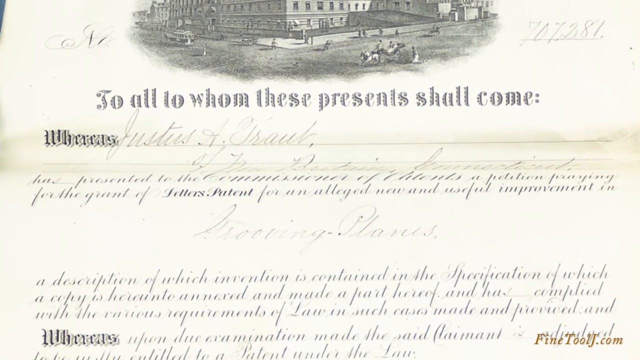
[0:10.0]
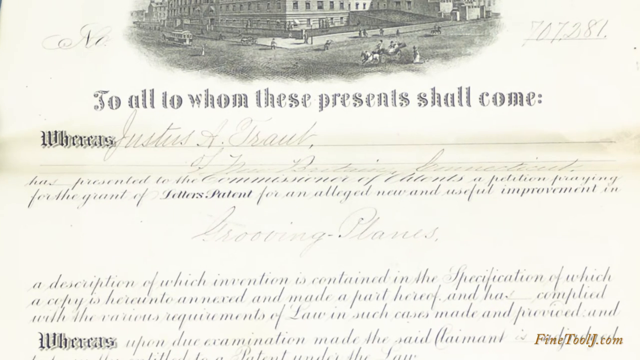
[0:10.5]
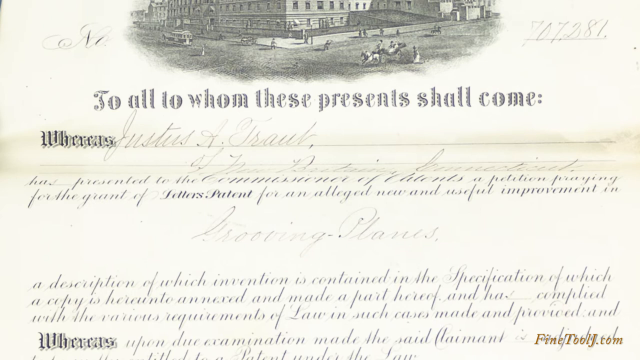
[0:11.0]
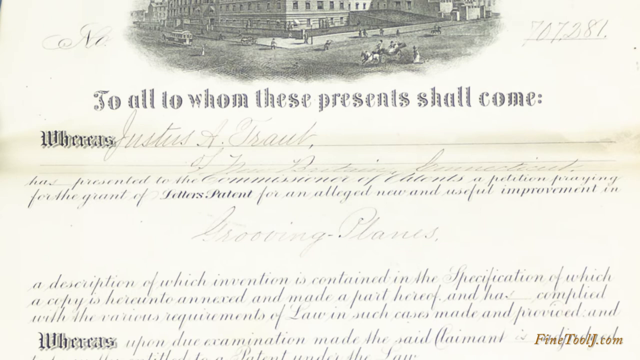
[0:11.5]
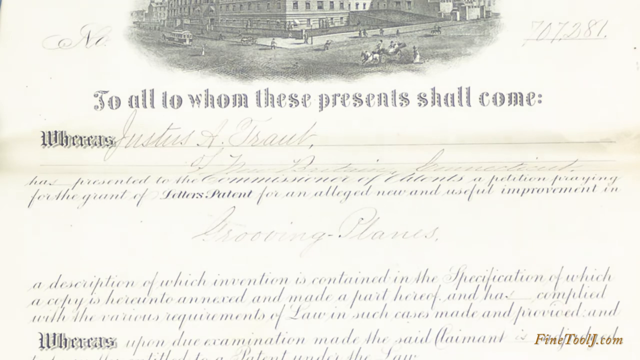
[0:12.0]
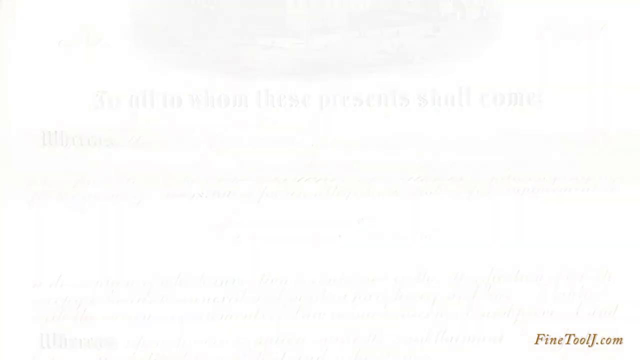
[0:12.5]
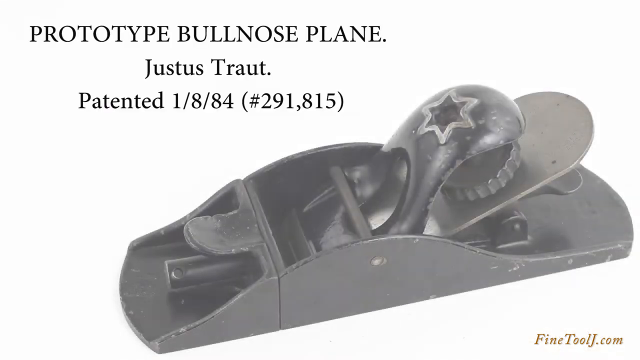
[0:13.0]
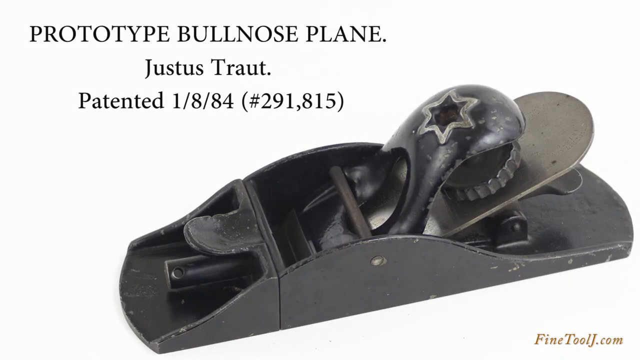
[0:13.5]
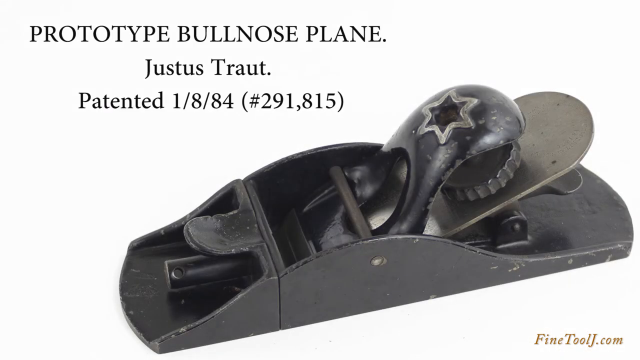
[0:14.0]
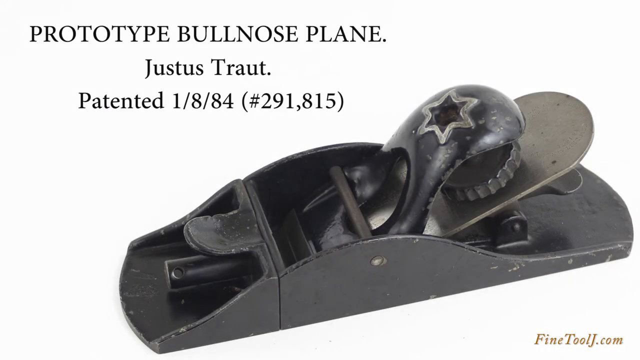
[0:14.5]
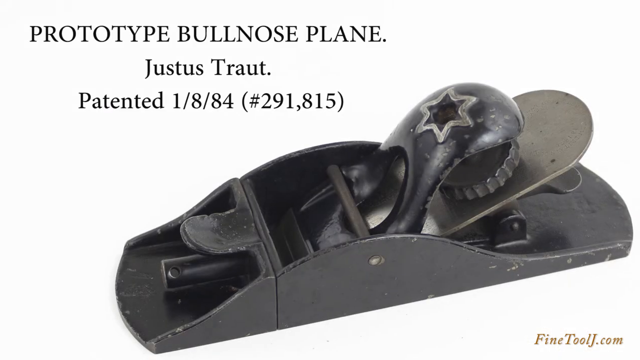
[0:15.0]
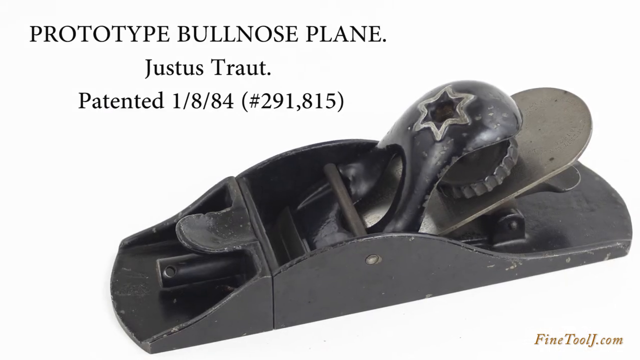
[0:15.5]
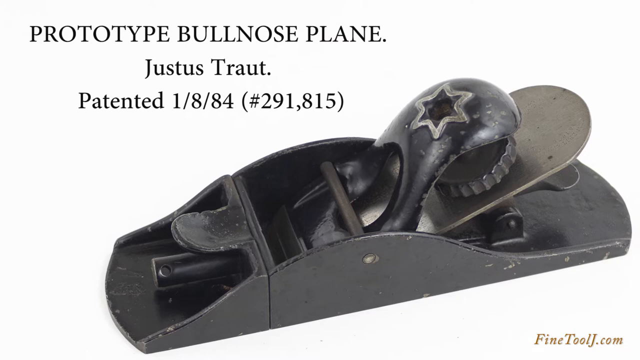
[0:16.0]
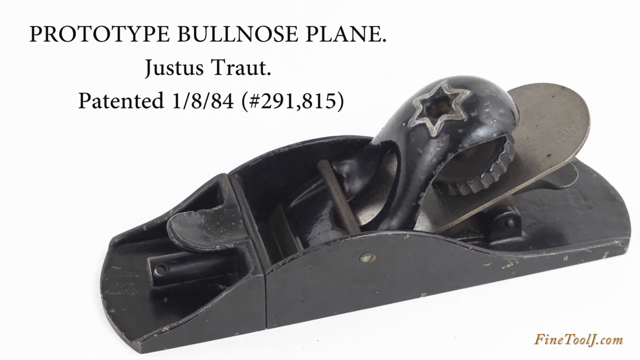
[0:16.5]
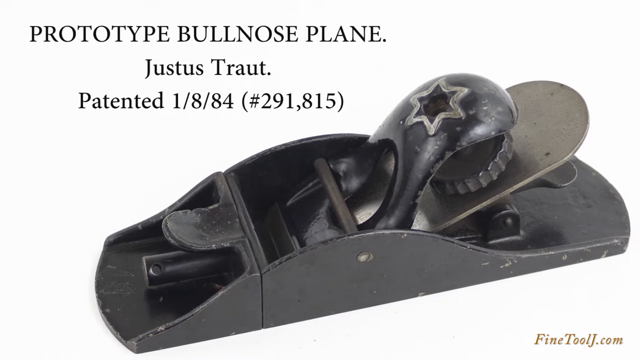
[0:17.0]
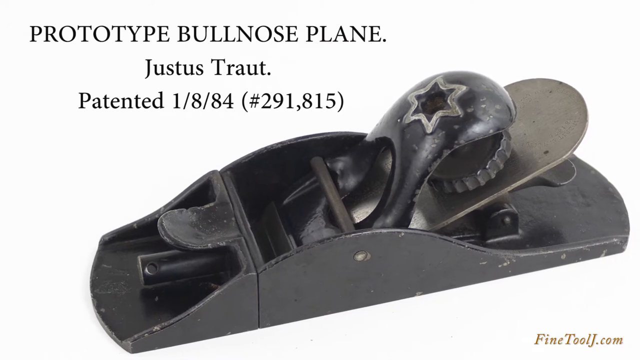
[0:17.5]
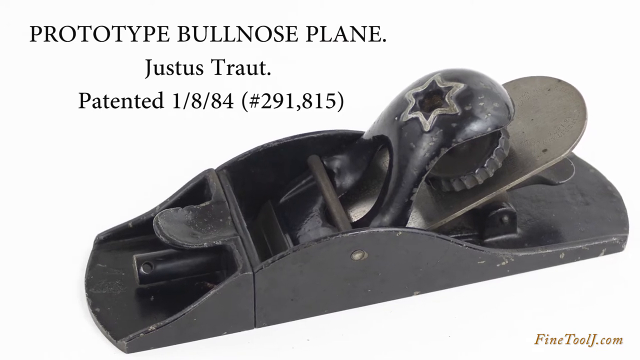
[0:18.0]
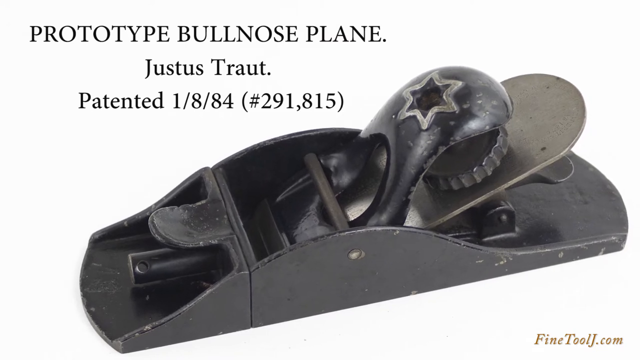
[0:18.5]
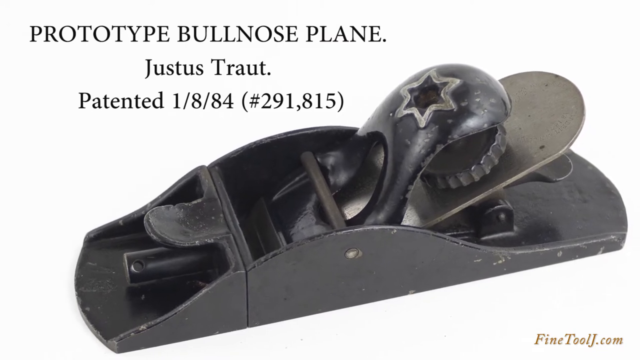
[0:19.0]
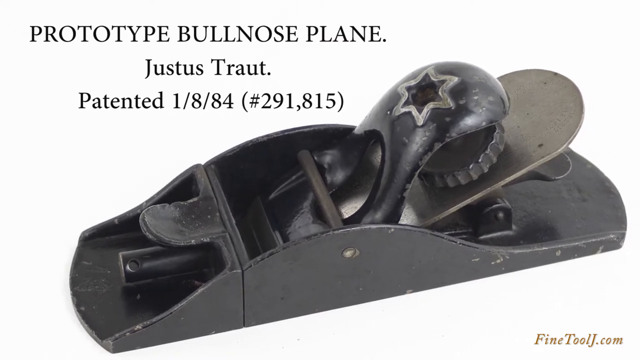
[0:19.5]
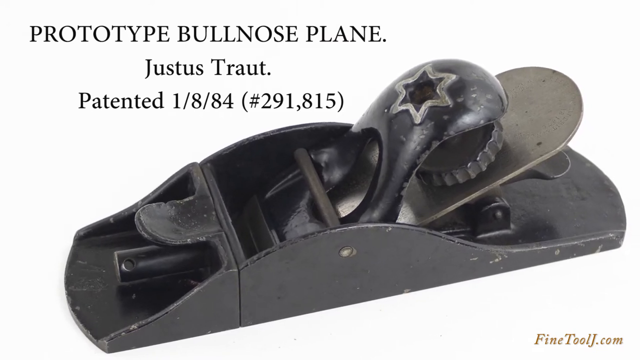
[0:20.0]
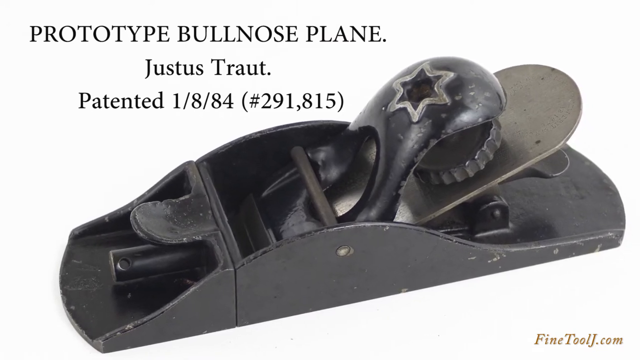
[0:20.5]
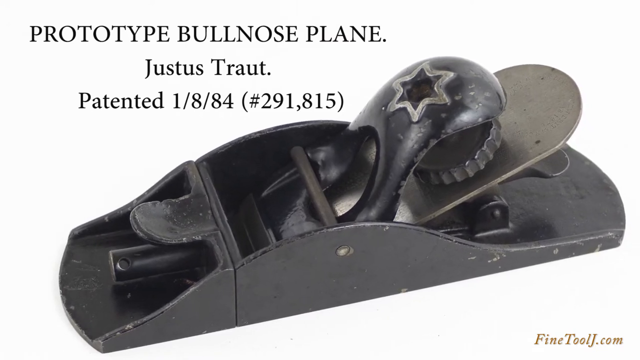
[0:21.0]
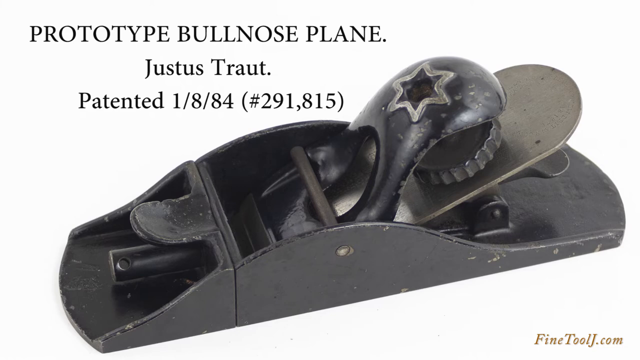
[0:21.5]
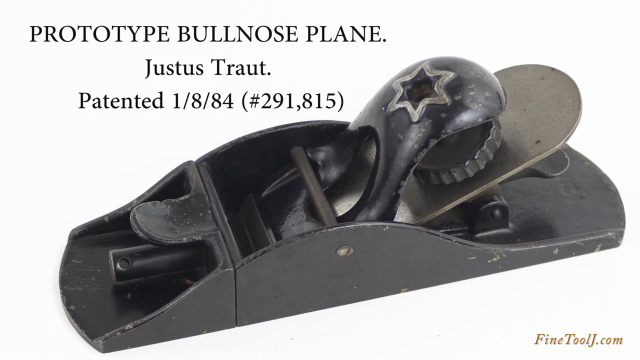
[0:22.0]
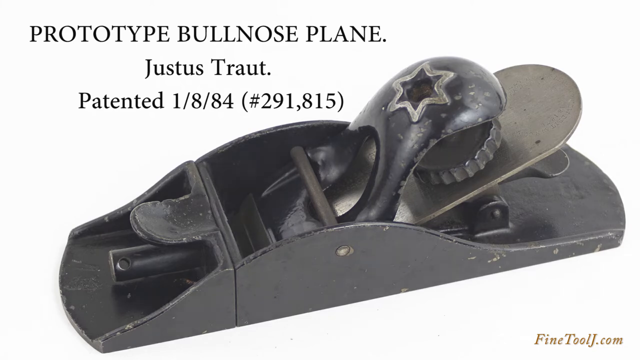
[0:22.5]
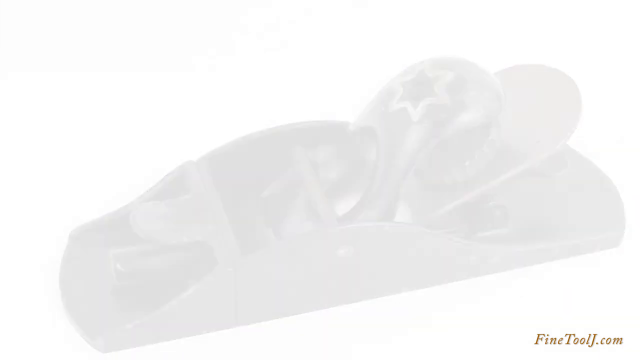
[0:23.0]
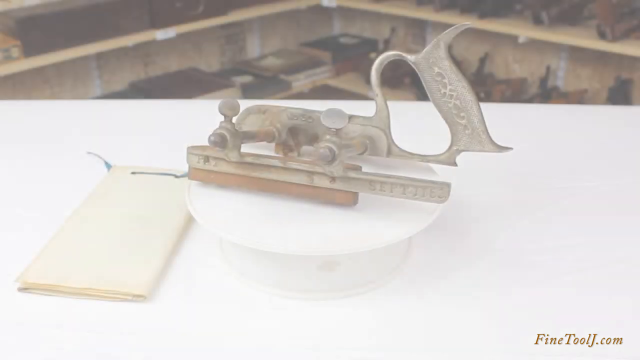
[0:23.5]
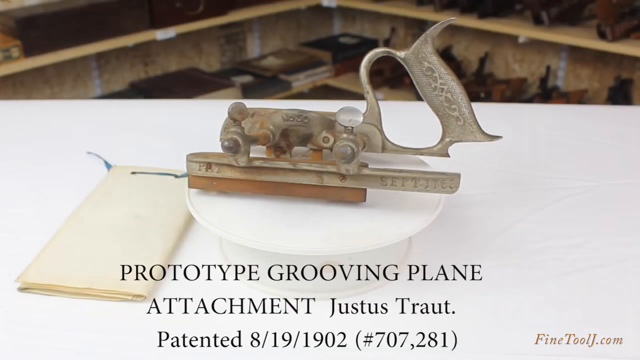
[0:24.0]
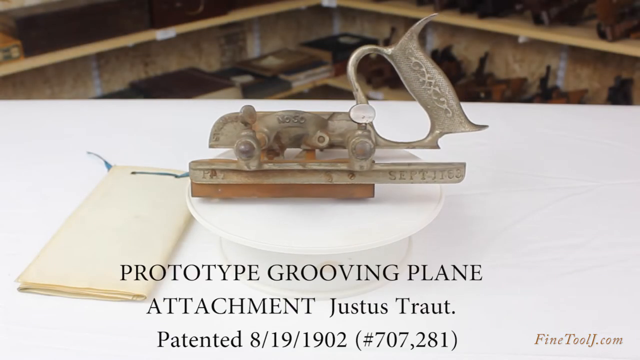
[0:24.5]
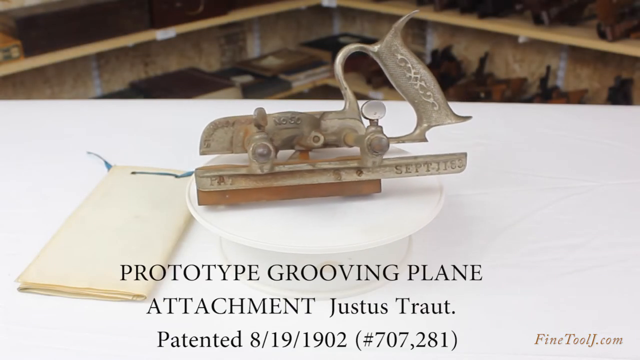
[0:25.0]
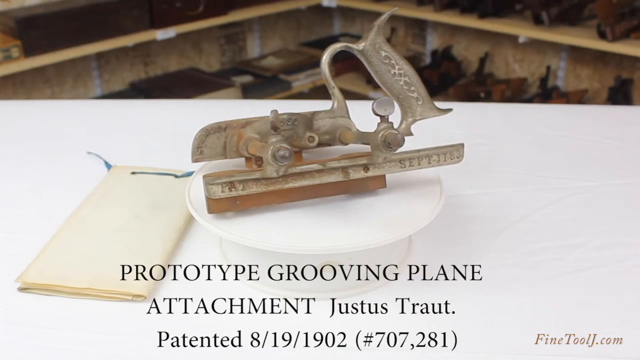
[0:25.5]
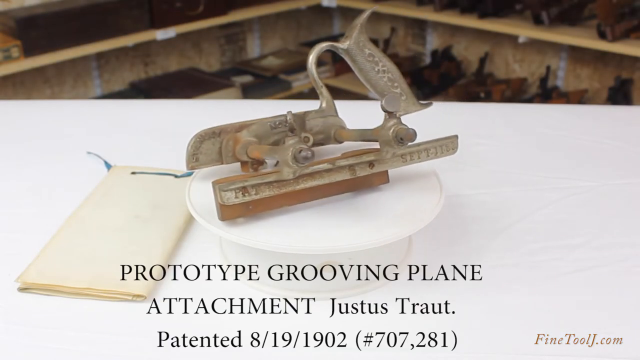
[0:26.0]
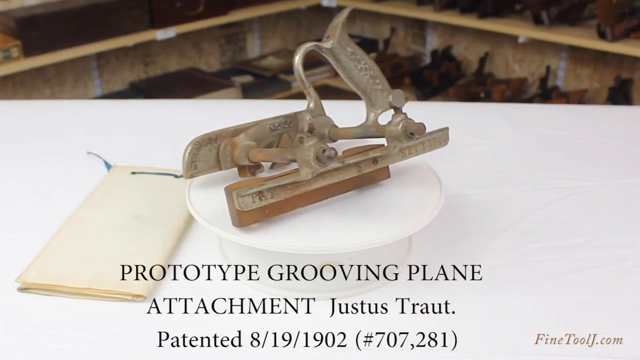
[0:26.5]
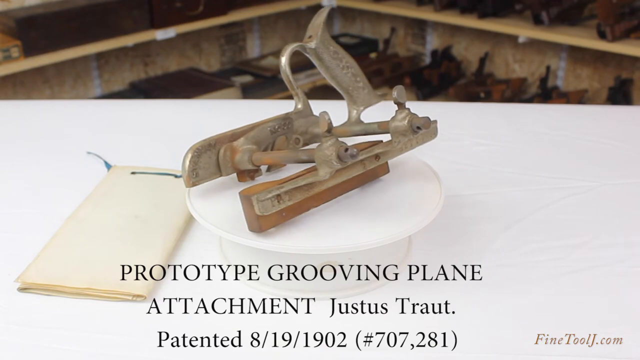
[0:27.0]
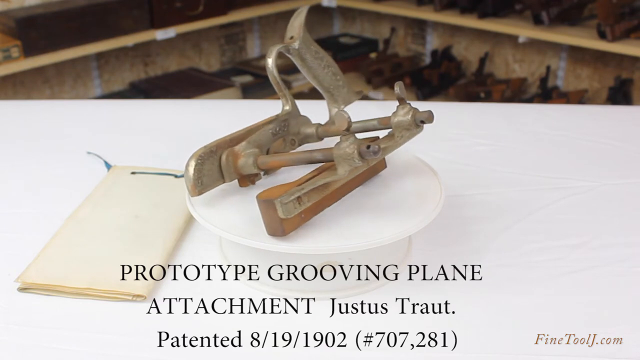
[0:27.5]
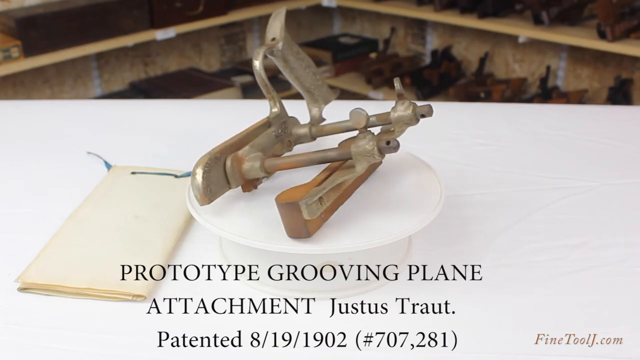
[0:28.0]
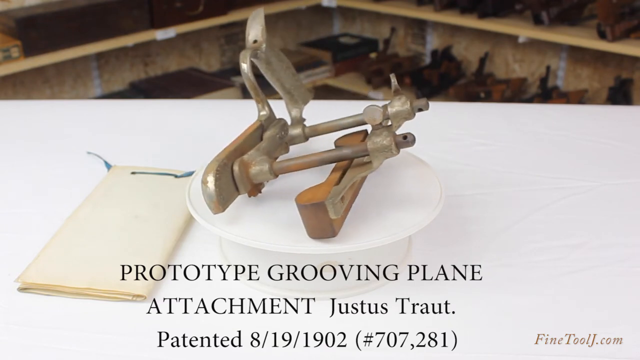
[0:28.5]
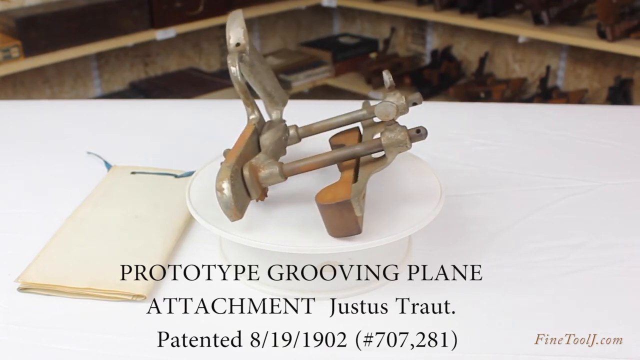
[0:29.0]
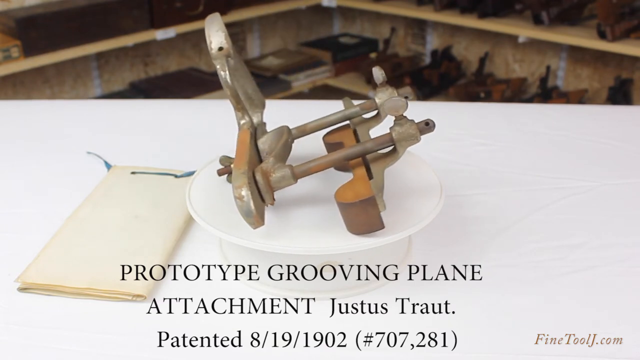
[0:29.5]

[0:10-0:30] A white document has, at its top, an illustration of an intersecting block or street. On the street are both a horse and buggy and a car or vehicle, people are walking on the sidewalk and through the street, and several buildings are illustrated in the background. Beneath the illustration, gray text says "To all to whom these presents shall come:". In the lower right corner of the video, brown text reads "FinetoolJ.com". The video zooms in on the document and fades to white. When it fades back in, the background is white, and black text in the upper left corner reads "Prototype Bullnose Plane.", with "Justus Traut." beneath it, then "Patented 1/8/84" followed in parentheses by the number 291,815. A black contraption is in the lower right corner, and the video zooms in on it before fading to white. When it fades back in, a contraption is on a white rotating platform on a white table, with a pamphlet on the left side of the table and shelves holding various objects in the background. Black text at the front reads "prototype grooving plane", with "attachment Justus Traut." beneath it and then "patented 8/19/1902" followed in parentheses by "#707,281". The contraption continues to spin counterclockwise on the white platform.